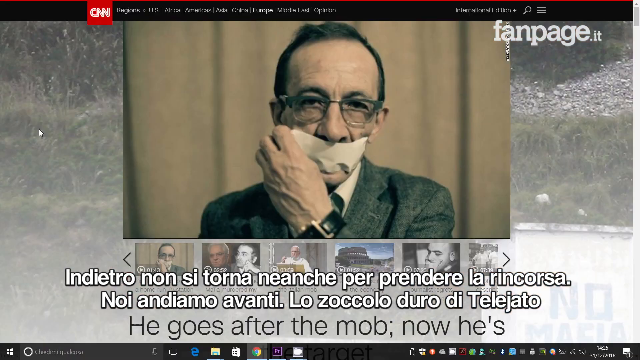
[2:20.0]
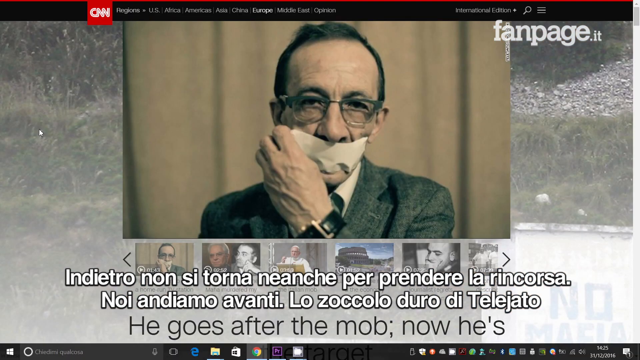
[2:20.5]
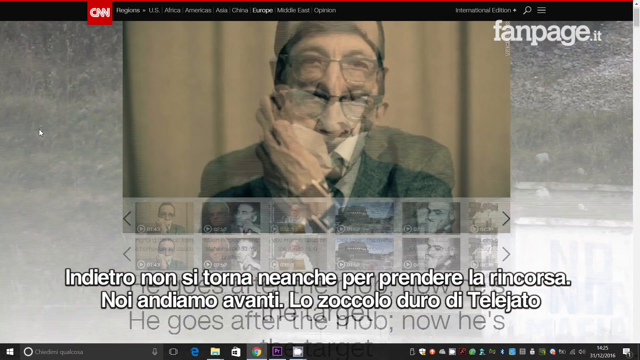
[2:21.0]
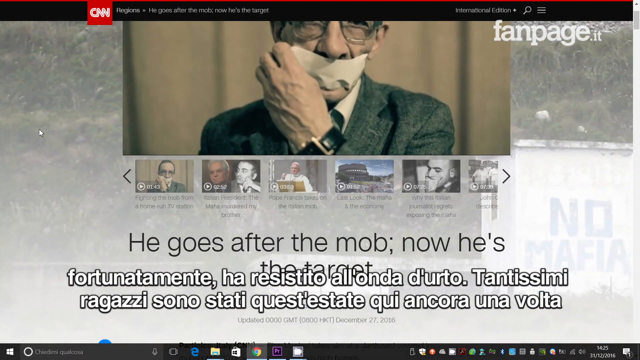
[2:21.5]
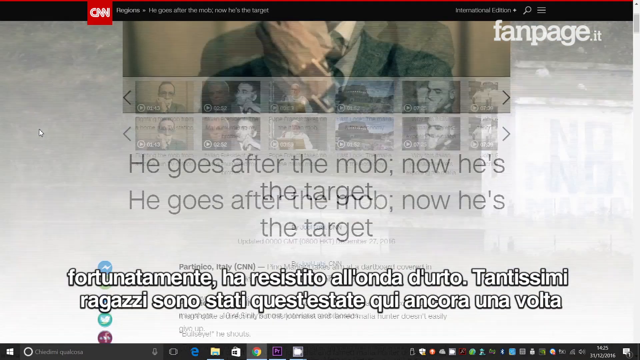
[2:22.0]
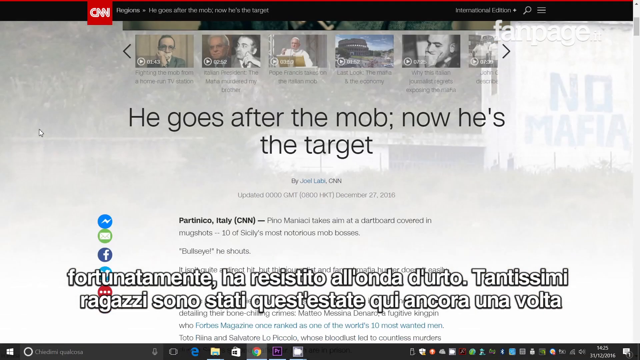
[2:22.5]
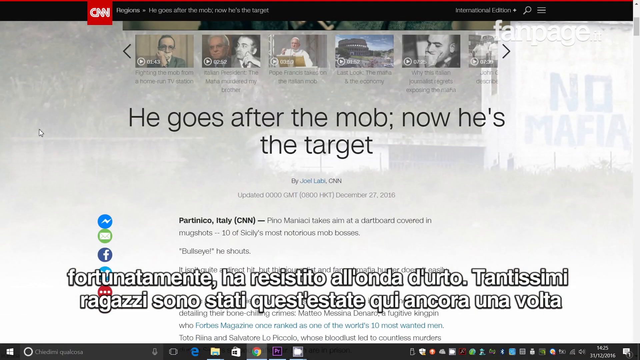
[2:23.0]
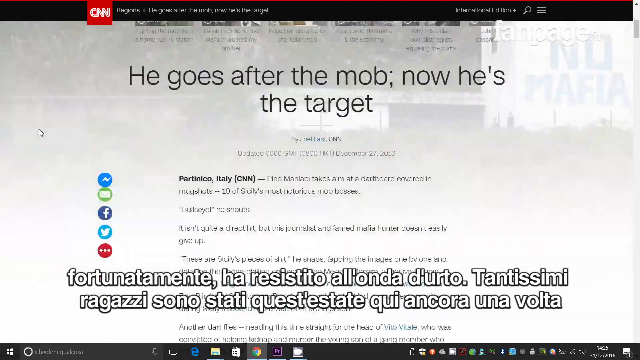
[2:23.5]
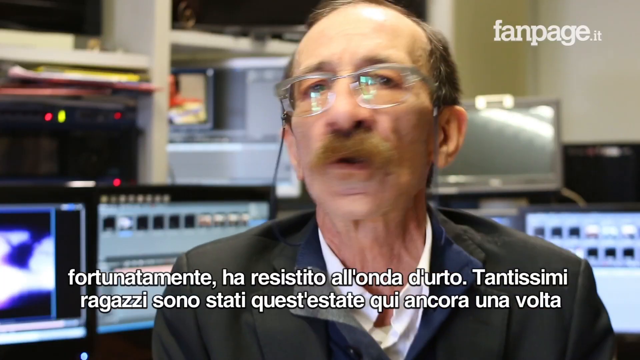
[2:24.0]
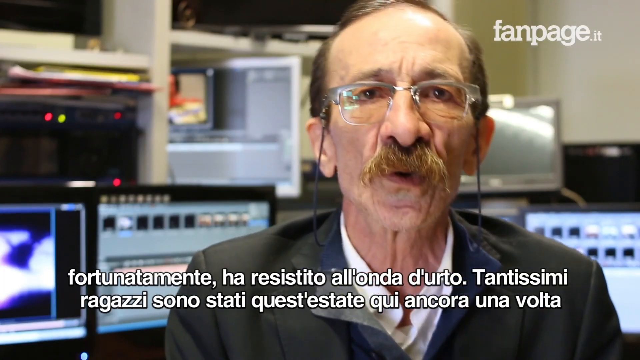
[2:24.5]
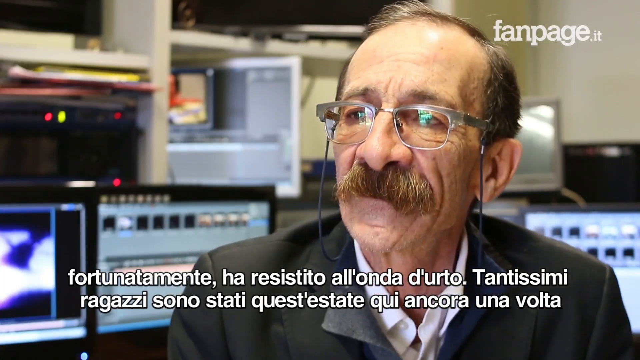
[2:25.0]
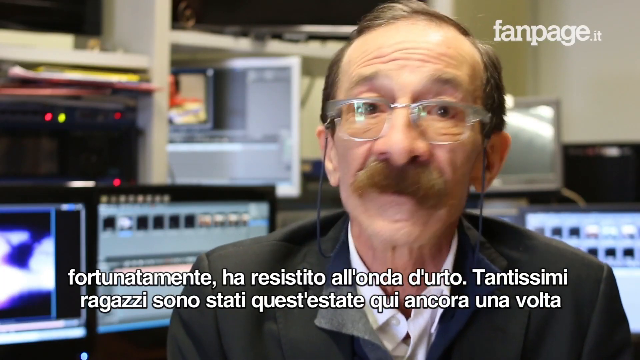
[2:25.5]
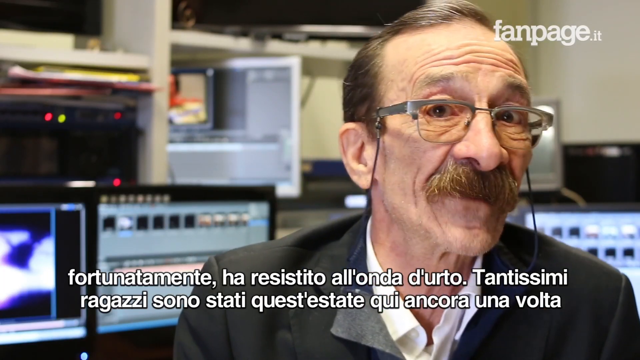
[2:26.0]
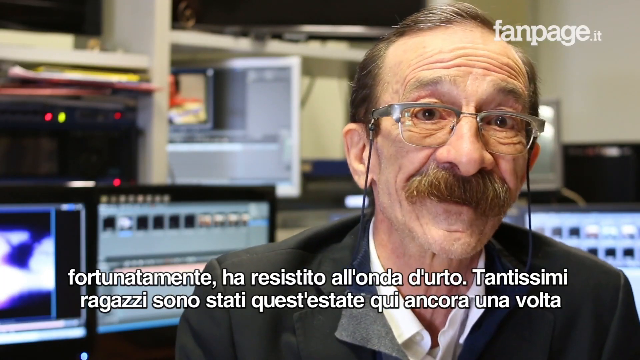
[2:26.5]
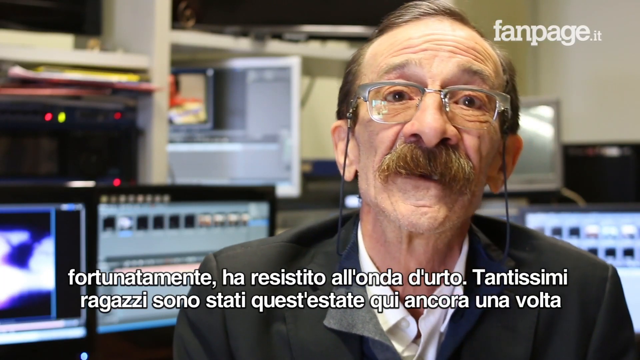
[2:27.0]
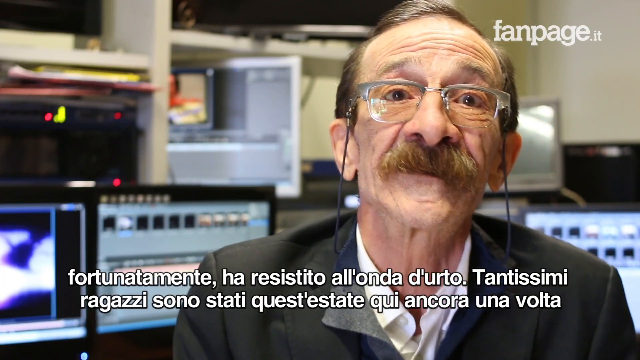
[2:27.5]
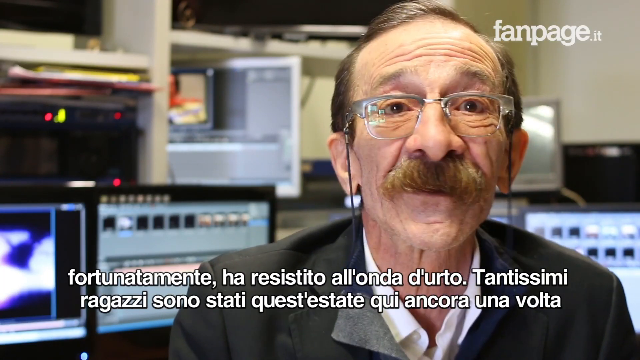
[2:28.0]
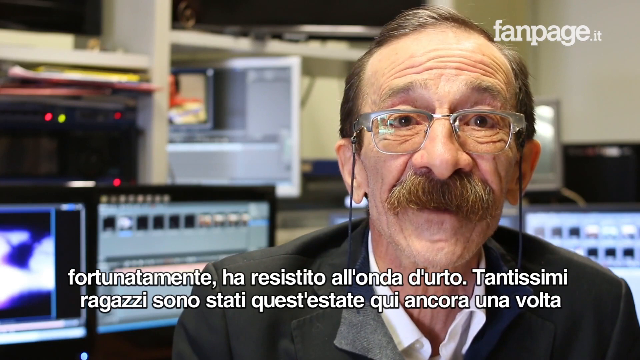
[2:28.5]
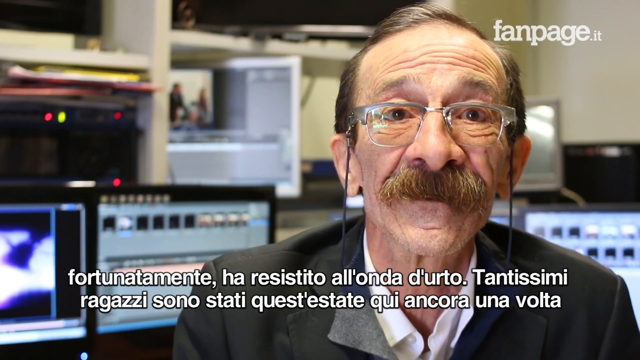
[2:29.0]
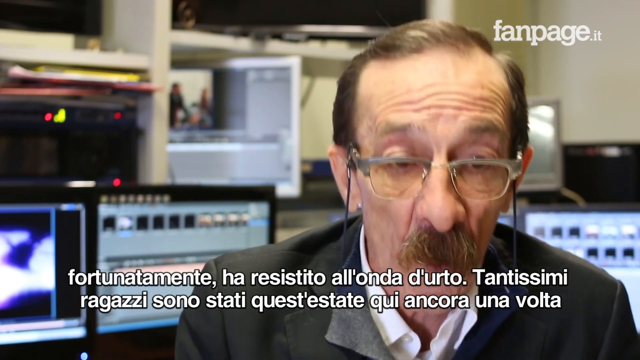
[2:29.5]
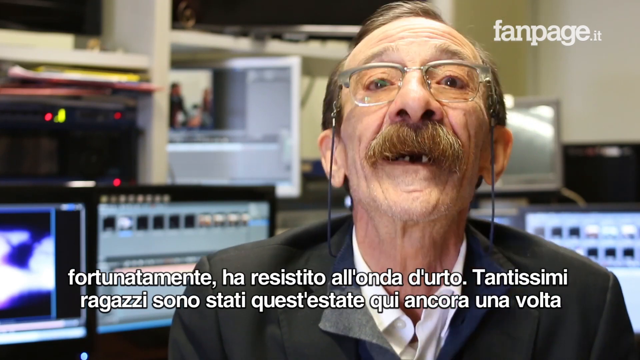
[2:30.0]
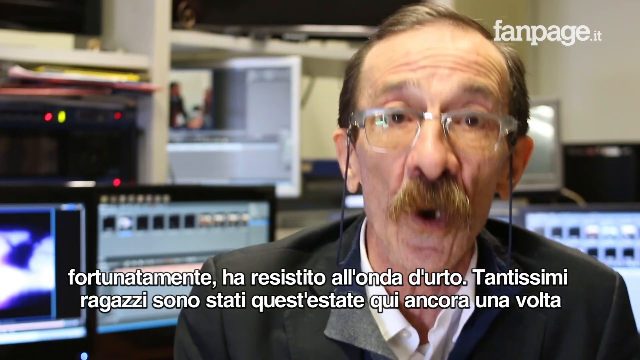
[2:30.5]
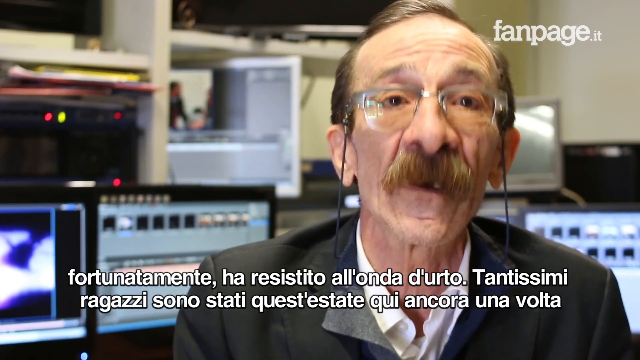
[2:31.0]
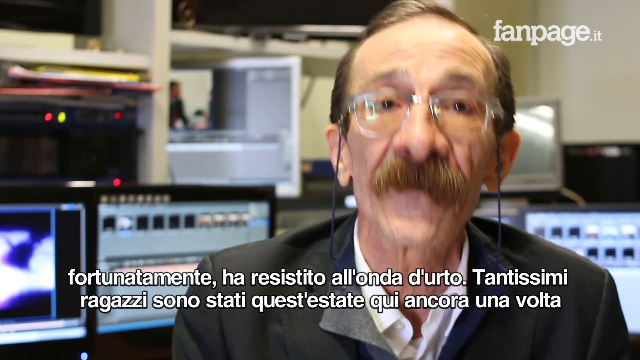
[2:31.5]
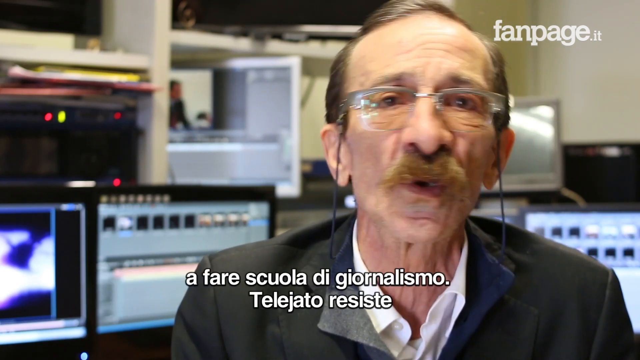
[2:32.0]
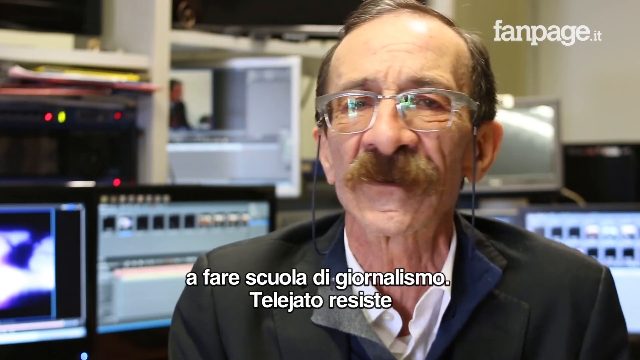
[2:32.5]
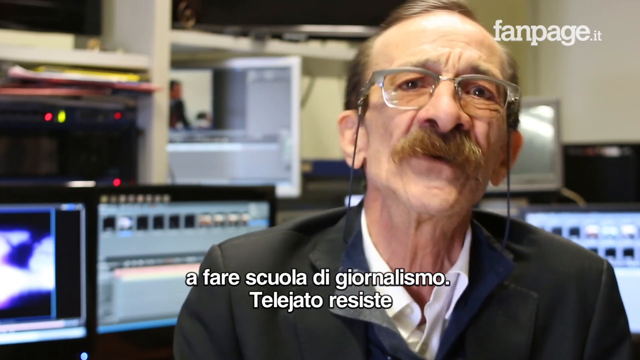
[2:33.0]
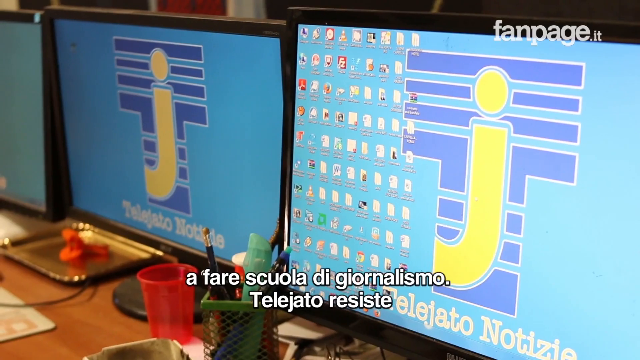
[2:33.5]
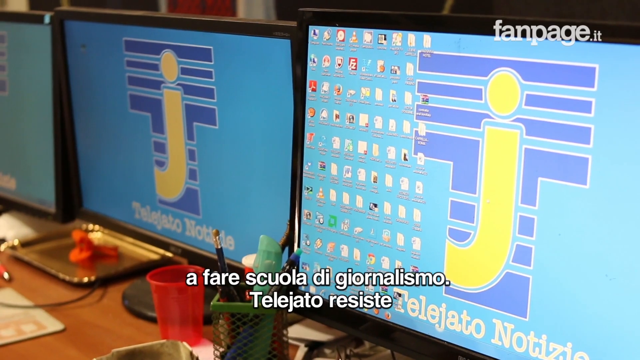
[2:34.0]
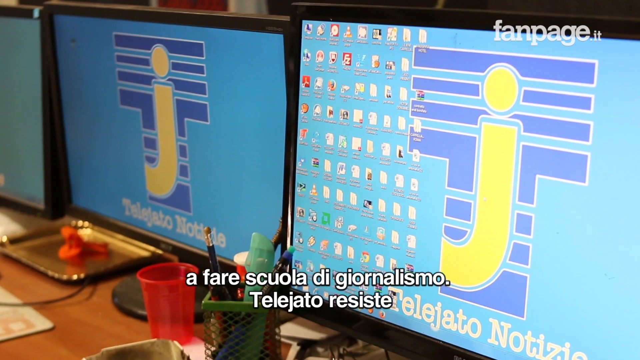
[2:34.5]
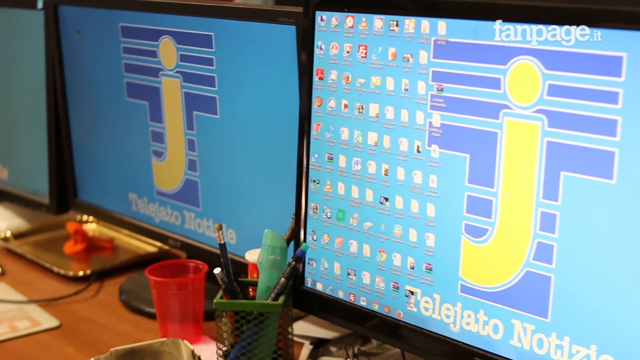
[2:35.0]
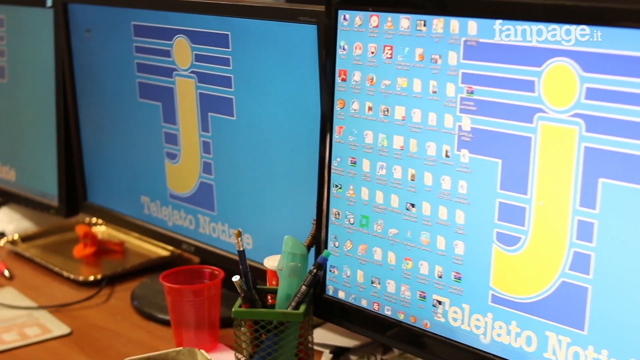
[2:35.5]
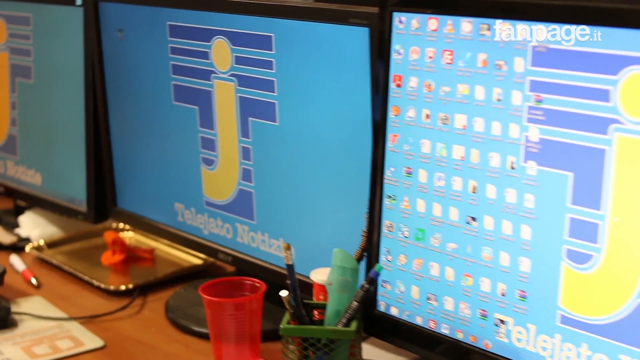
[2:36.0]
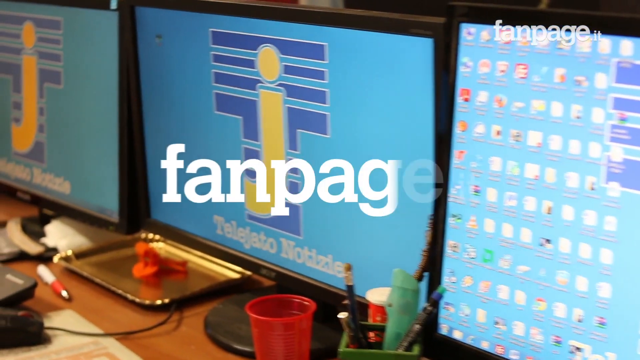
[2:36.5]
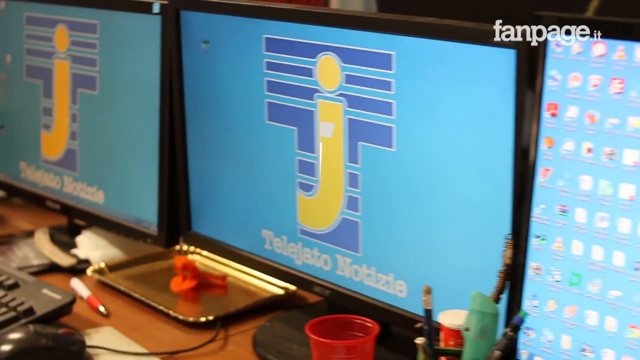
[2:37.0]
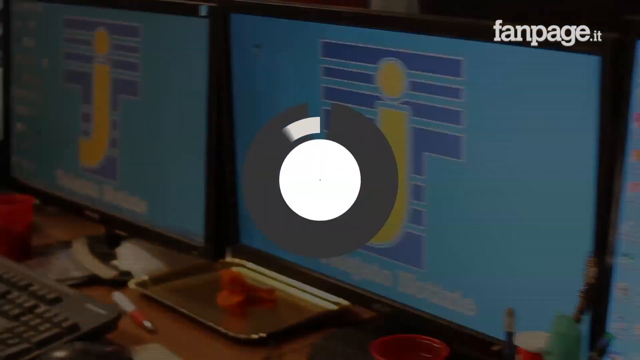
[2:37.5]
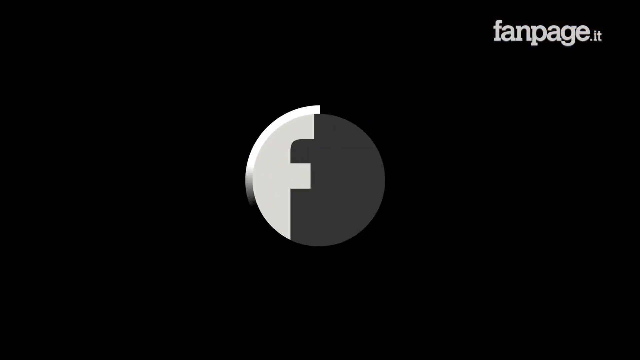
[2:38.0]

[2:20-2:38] The main photo on the page is of the old man with a receding hairline and glasses, with a piece of white tape or paper across his mouth; his left hand is held up across his body, holding the edge of the tape or paper as if he is about to pull it from his mouth. The view starts to scroll down the page. The man himself then appears on screen, being interviewed in an office-type area with monitors behind him. He has a receding hairline, glasses with slightly tinted lenses, and a distinctive moustache with the rest of his face clean shaven. He talks into the camera, moving his head quite a lot as he speaks but not gesturing with his hands. The next shot shows computer monitors, all with a blue background and a logo on them. The camera pans across these screens before fading out into the fanpage headline, and then a black page with the logo on it.